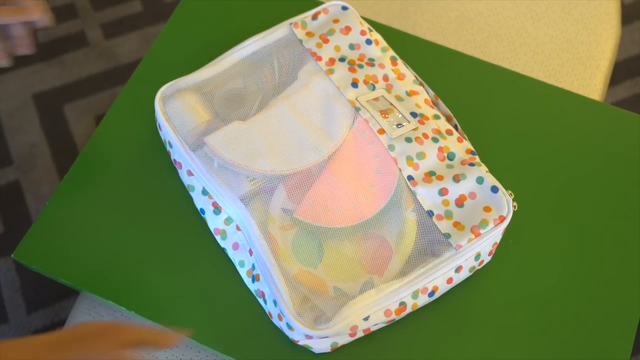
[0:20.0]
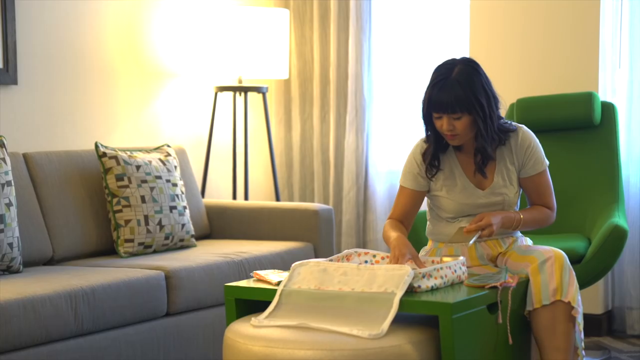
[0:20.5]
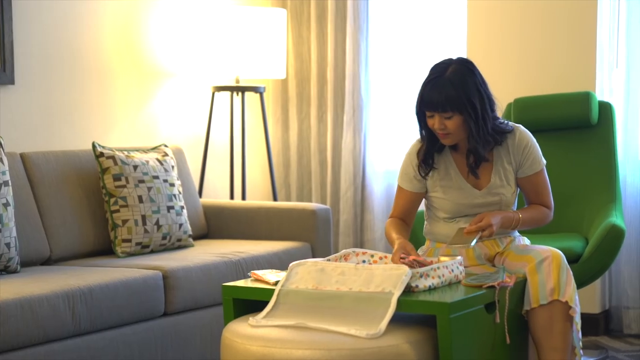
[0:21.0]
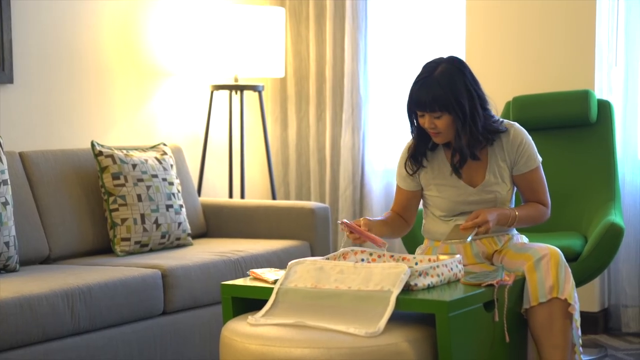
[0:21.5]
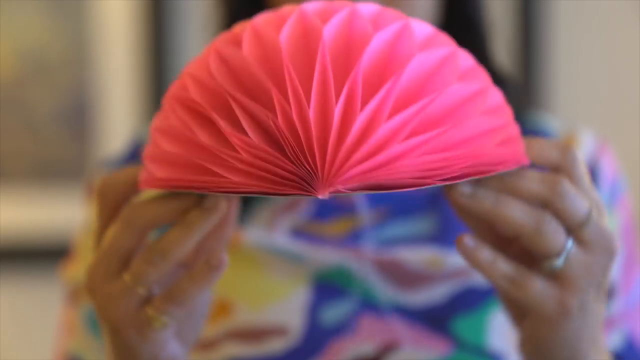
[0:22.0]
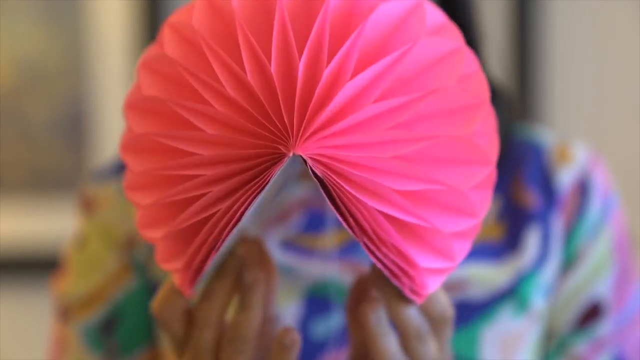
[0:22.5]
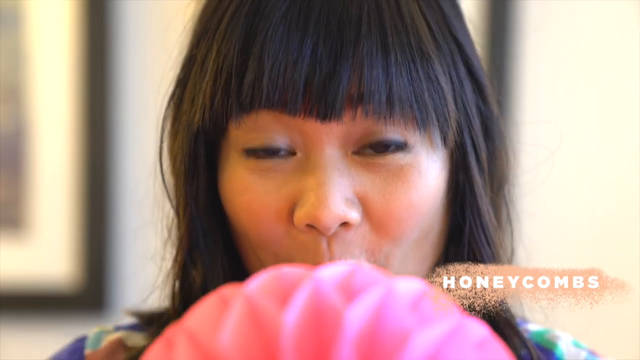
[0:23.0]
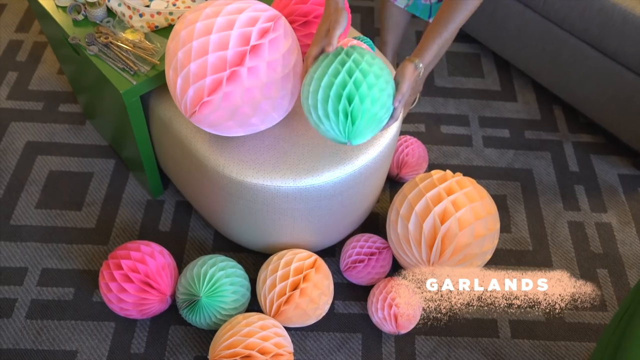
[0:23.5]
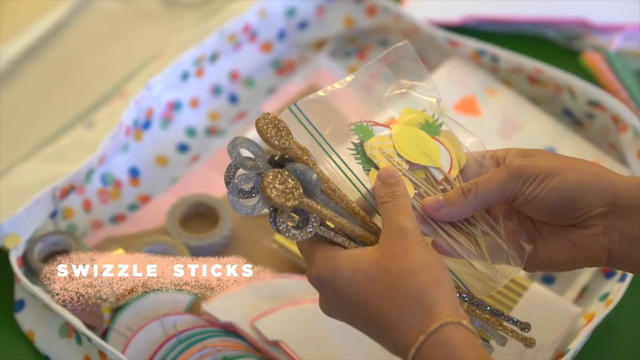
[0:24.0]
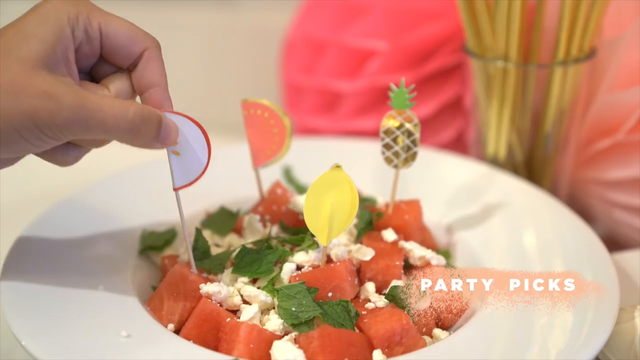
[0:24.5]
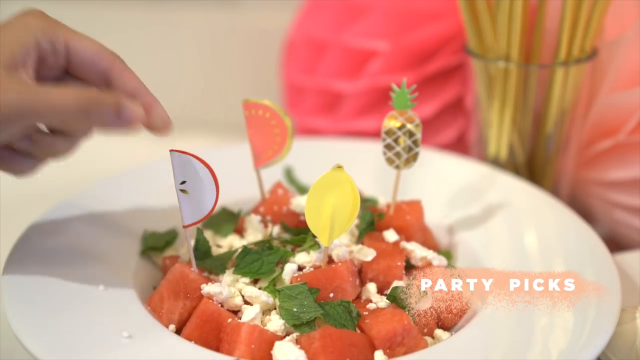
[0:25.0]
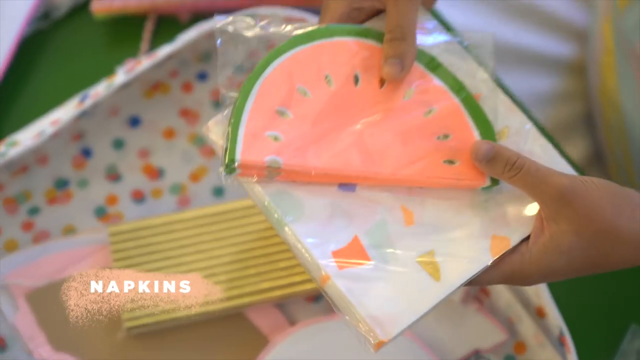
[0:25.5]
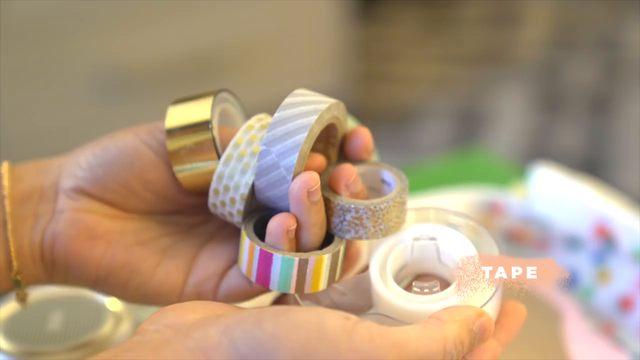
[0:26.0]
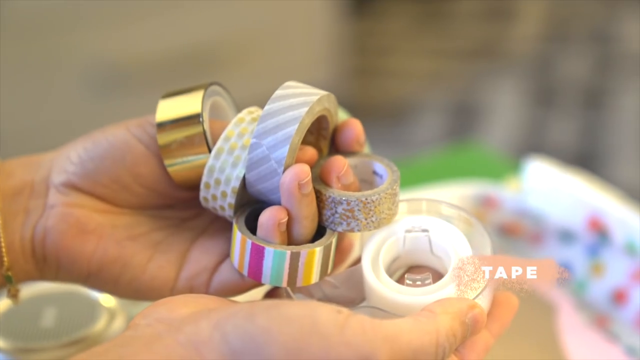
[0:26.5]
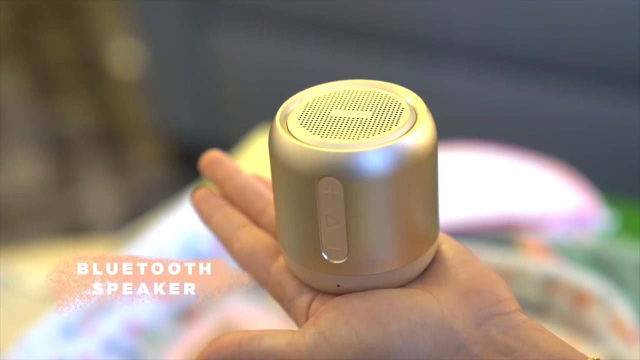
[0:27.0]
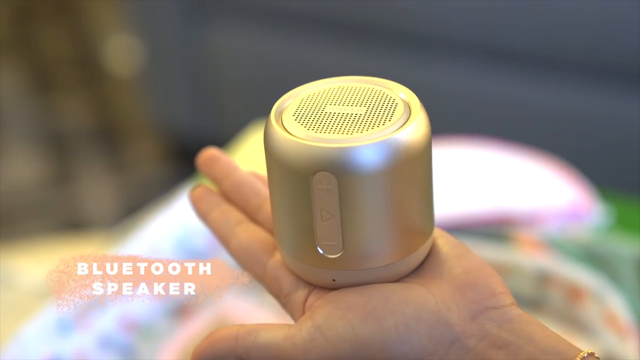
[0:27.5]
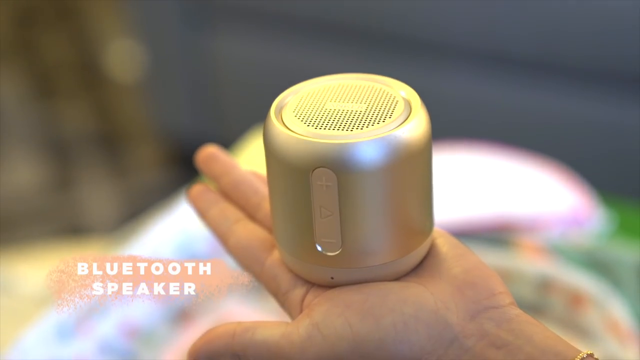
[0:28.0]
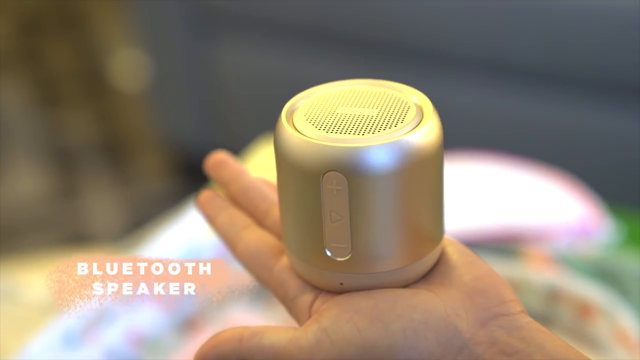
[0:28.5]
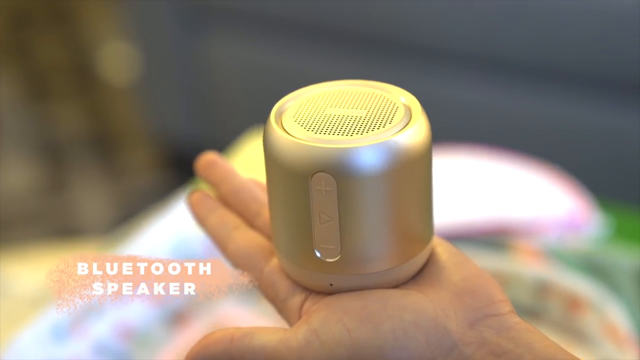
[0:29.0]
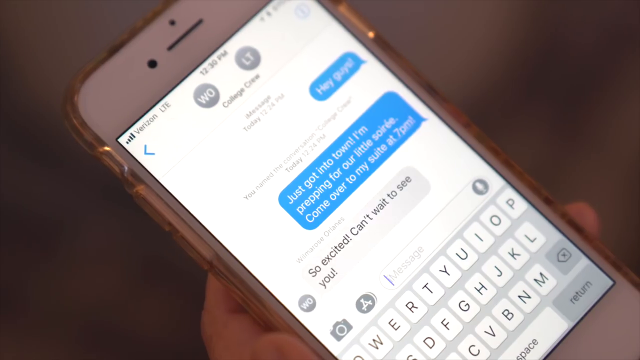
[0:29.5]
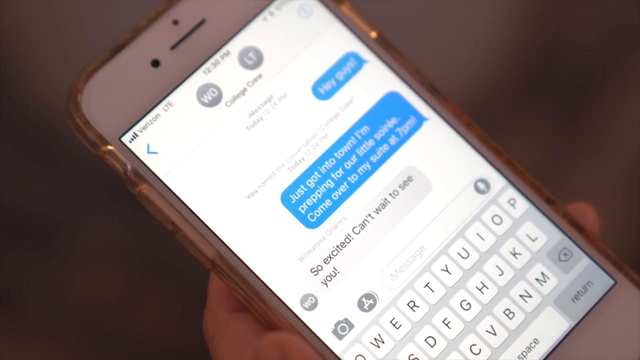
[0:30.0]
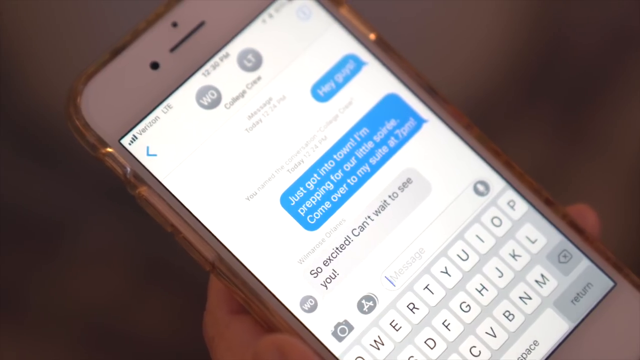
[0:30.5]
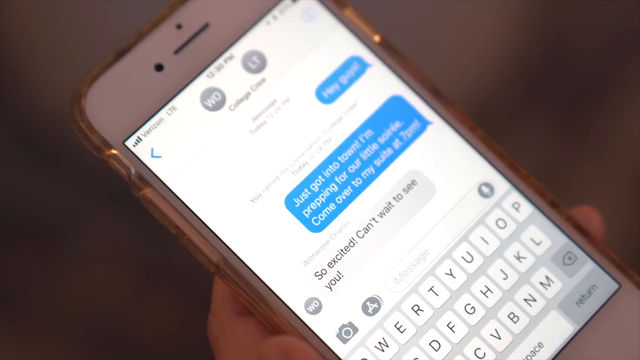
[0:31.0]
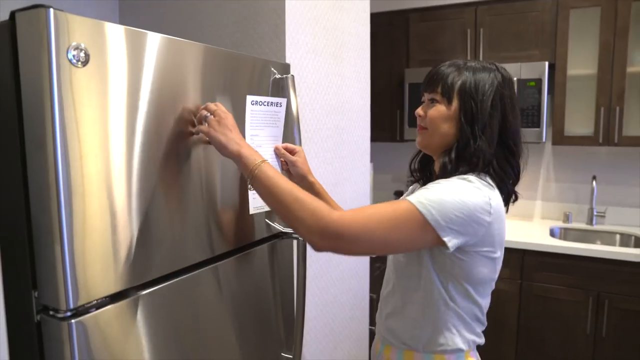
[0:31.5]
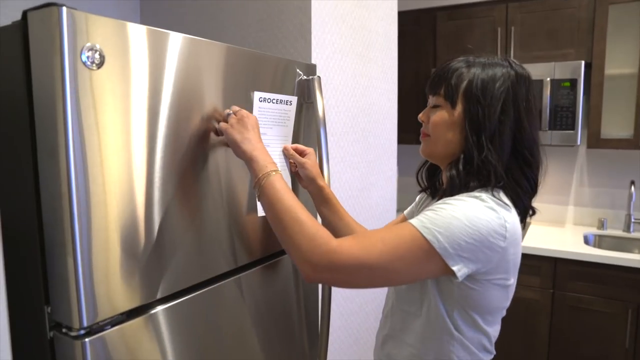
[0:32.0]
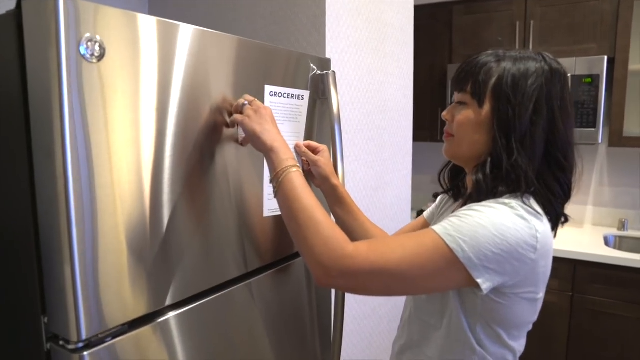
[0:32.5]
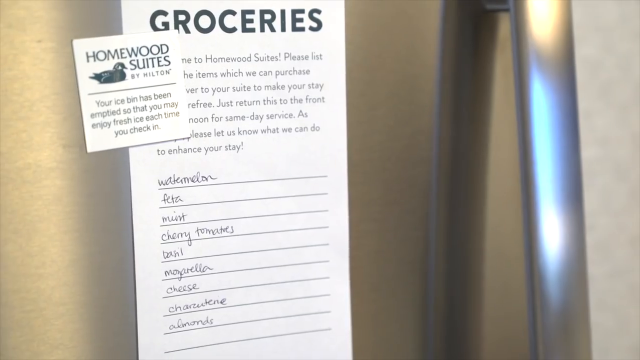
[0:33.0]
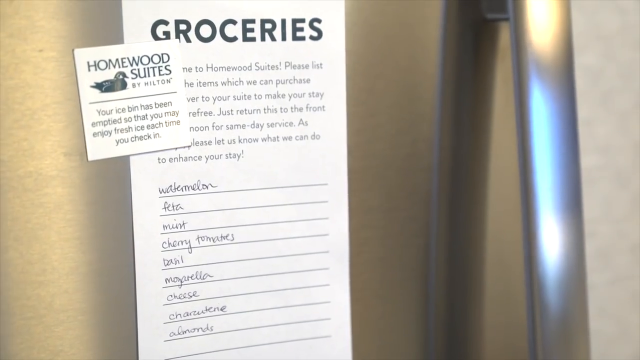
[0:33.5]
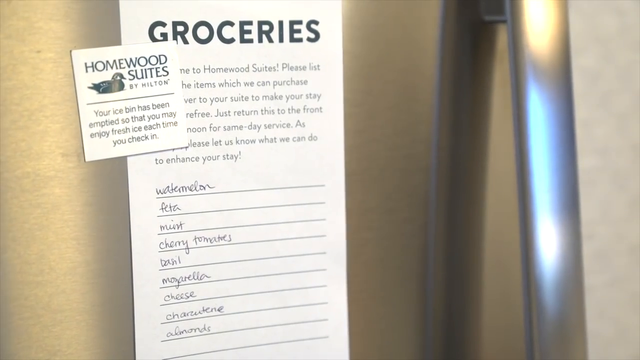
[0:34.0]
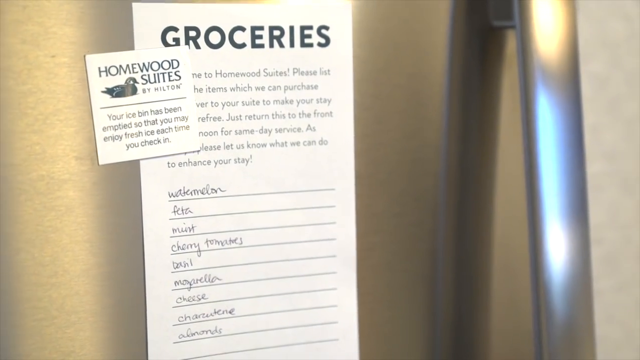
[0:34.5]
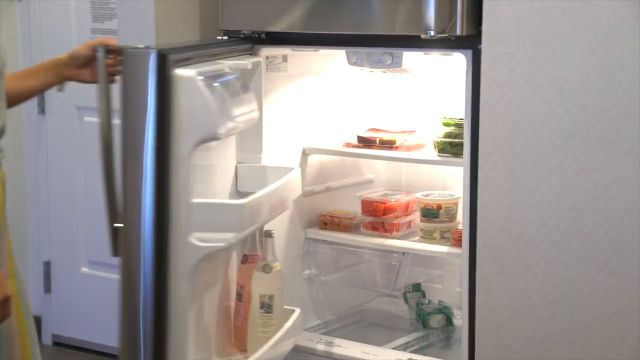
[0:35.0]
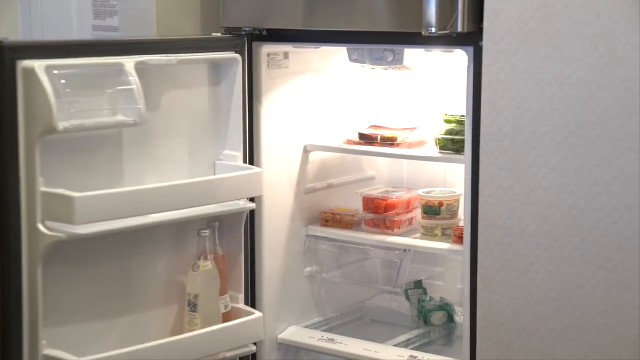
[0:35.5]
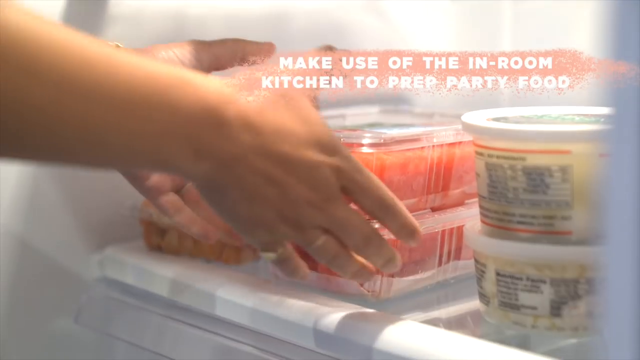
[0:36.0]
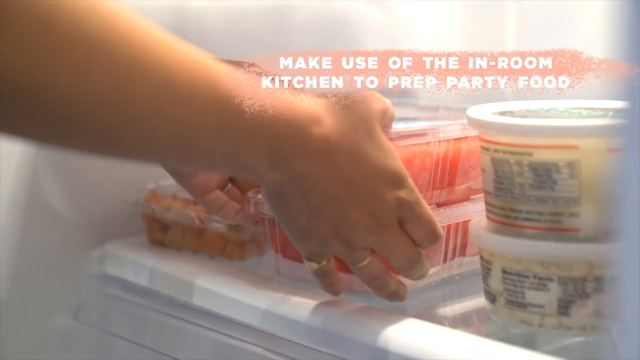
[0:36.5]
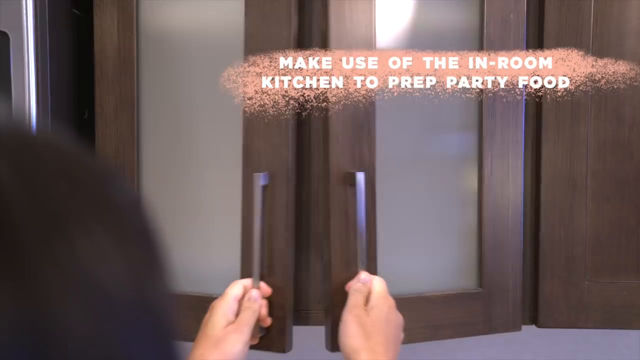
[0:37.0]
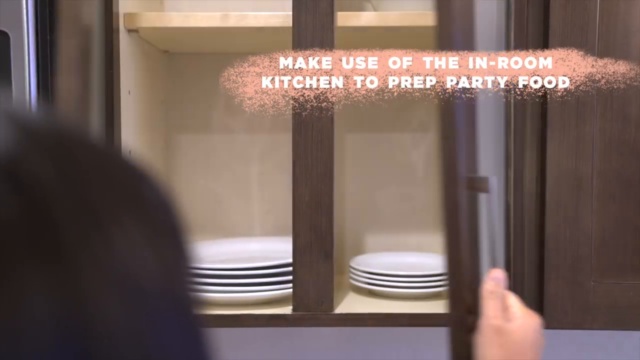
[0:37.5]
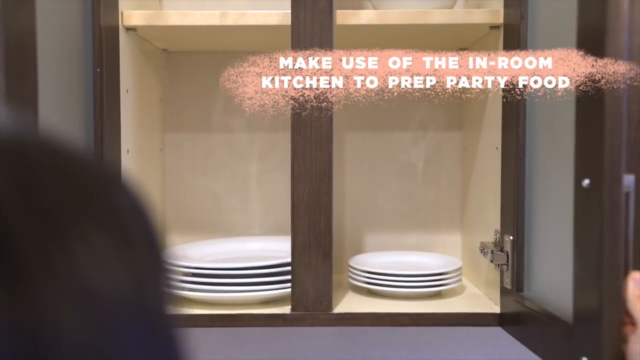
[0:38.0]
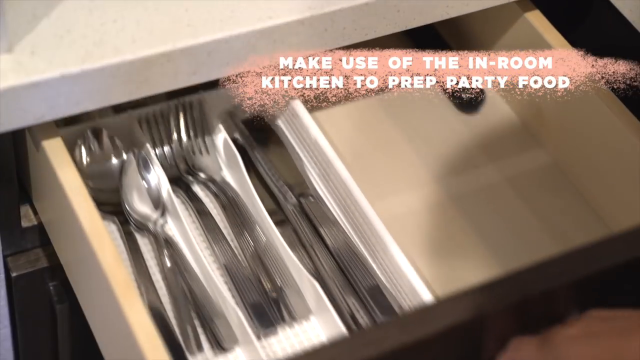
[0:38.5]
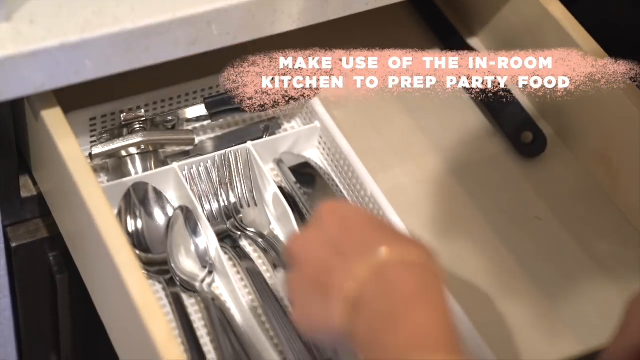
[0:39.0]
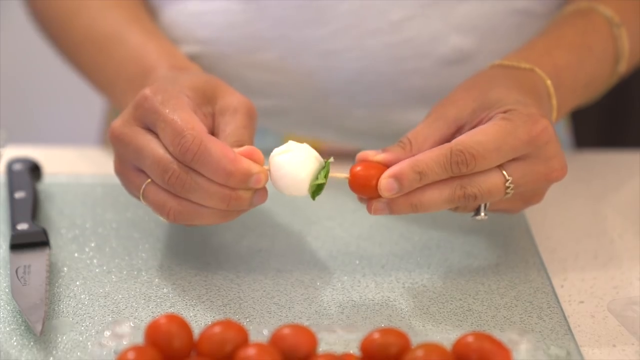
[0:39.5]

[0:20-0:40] A zip-up package holds a bunch of party equipment. The woman sits at a lime green chair and lime green table, going through the contents of the package. There are paper honeycombs and paper-looking garlands in very pastel spring colors. Shots show different items that are apparently in the package, such as party swizzlers and party pickers, which are like toothpicks that go into various foods; they look like they are going into watermelon or maybe salmon. There are very decorative napkins, some of which look watermelon shaped. A shot shows different types of tape with different patterns and designs, some gold metallic and some striped in different colors. There is also a Bluetooth speaker. A cell phone shows text saying they are happy or excited to come somewhere, and then the woman places a grocery list on top of something.